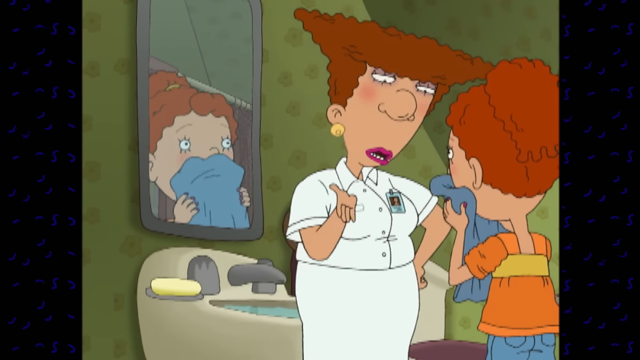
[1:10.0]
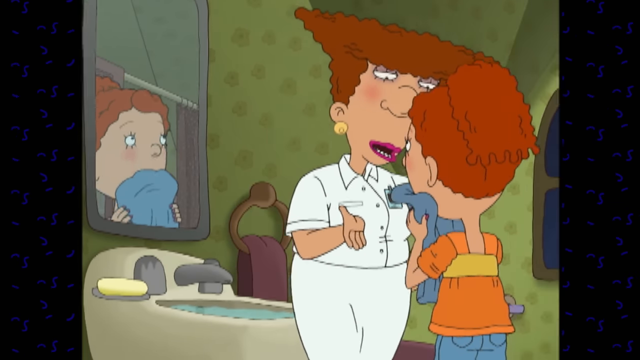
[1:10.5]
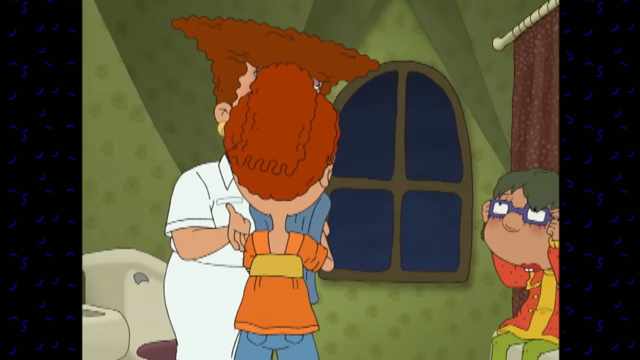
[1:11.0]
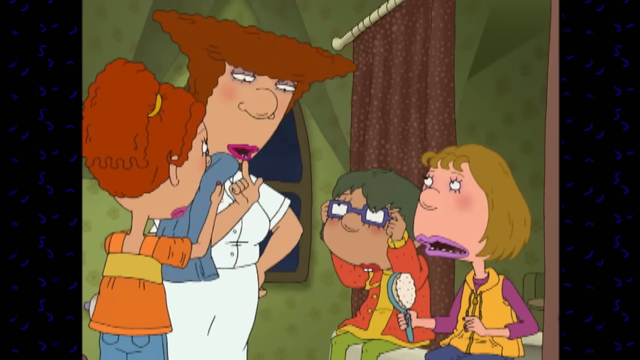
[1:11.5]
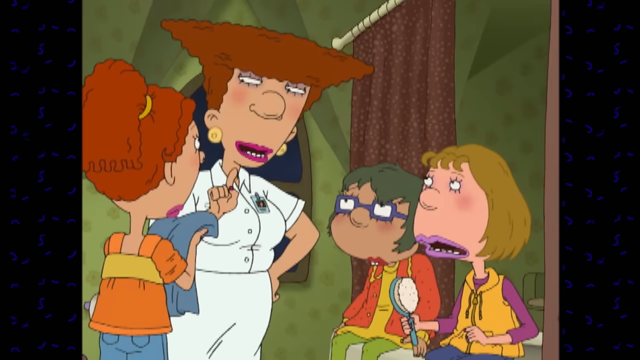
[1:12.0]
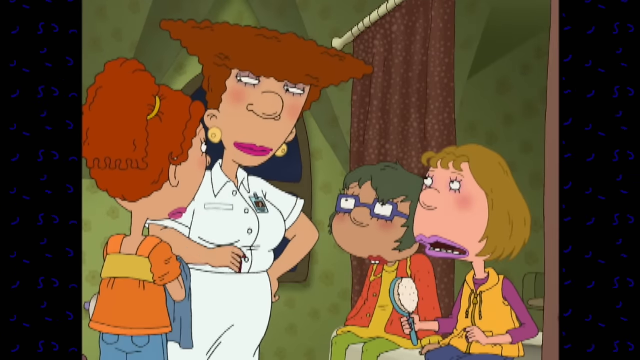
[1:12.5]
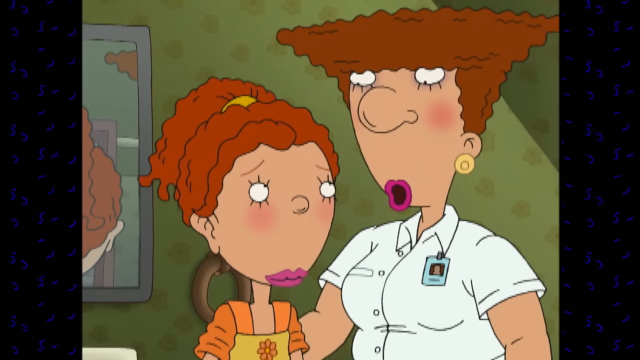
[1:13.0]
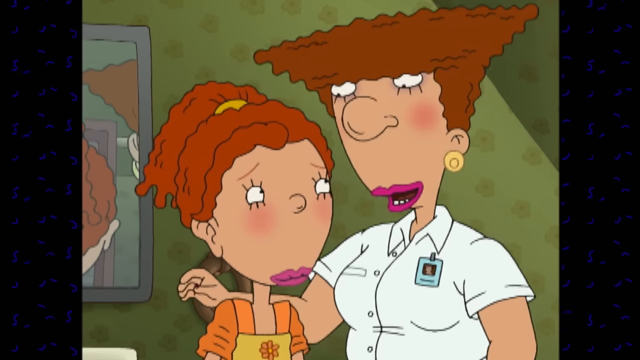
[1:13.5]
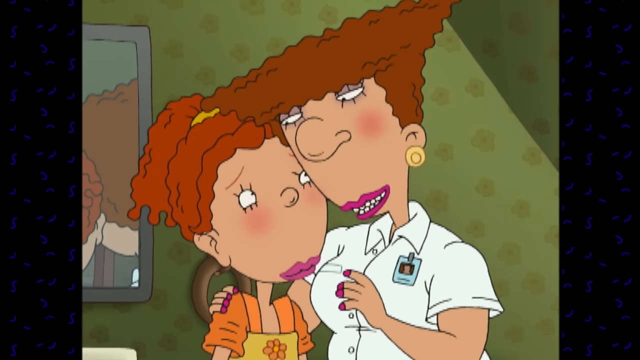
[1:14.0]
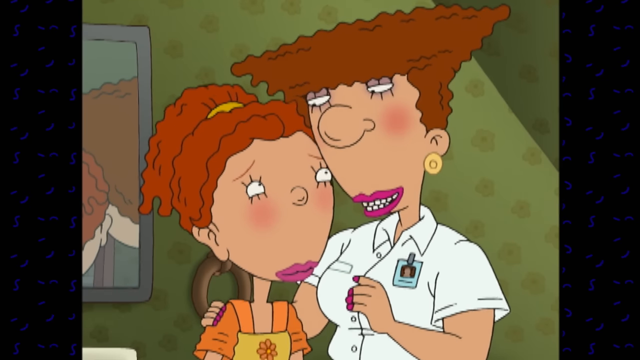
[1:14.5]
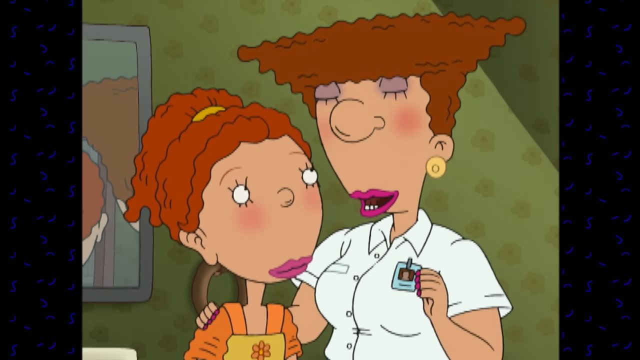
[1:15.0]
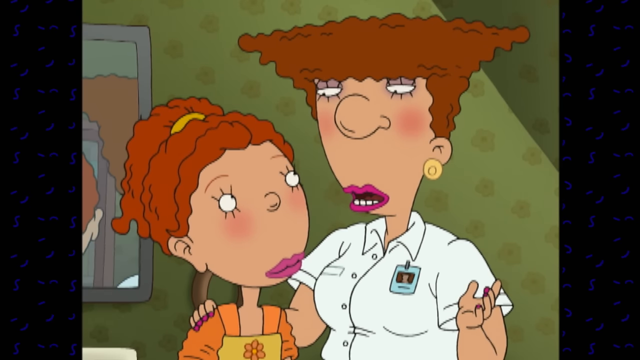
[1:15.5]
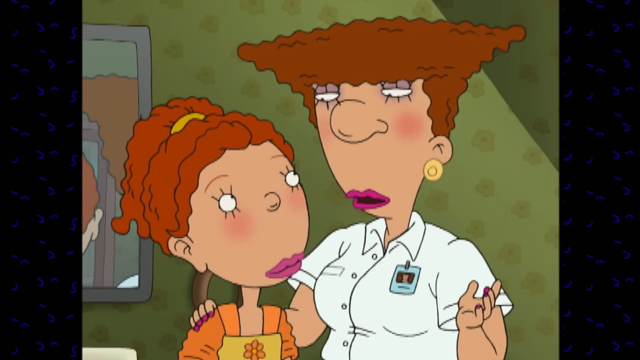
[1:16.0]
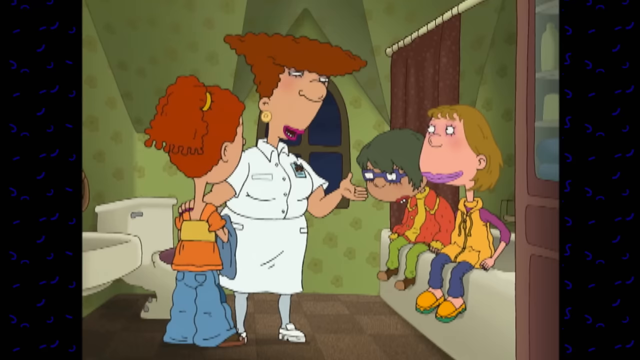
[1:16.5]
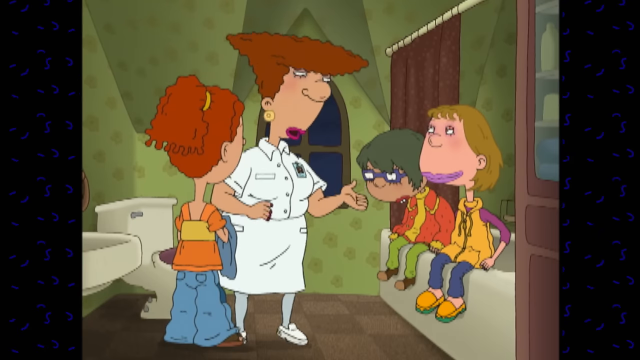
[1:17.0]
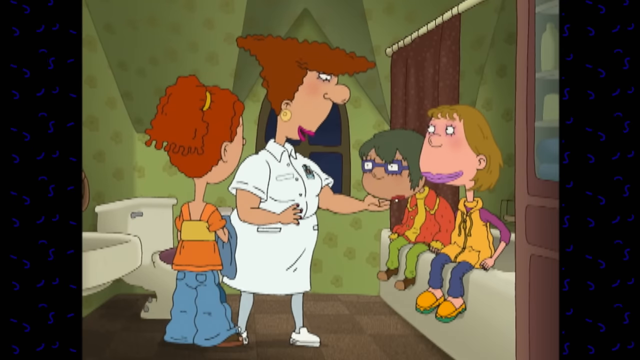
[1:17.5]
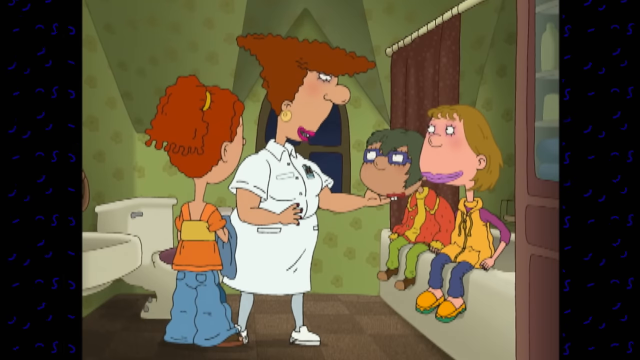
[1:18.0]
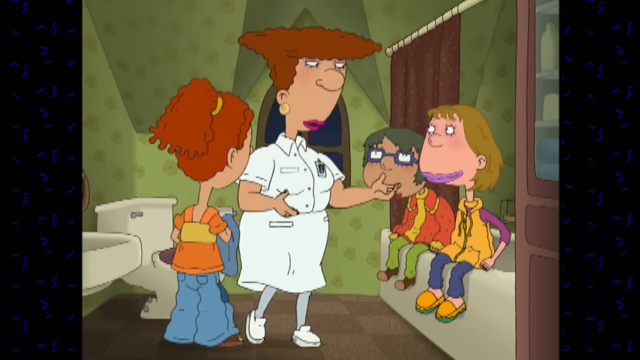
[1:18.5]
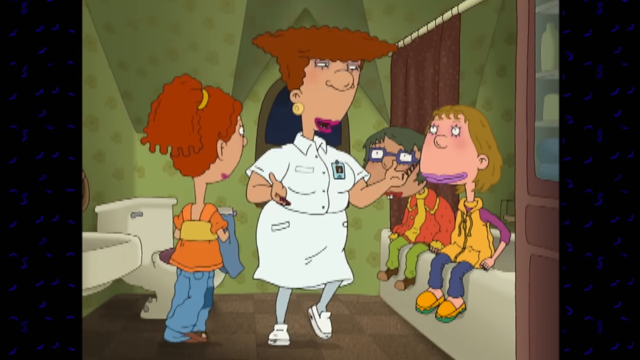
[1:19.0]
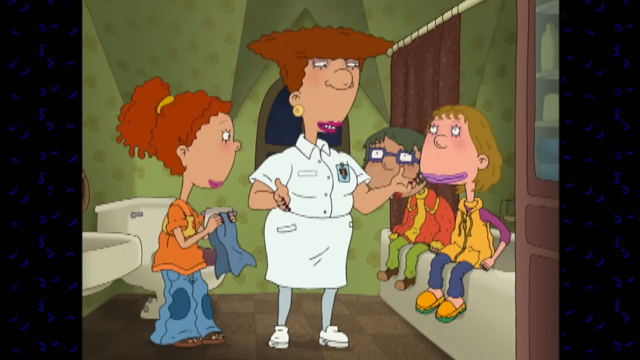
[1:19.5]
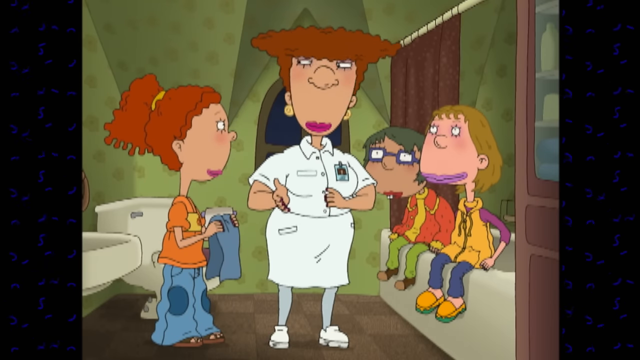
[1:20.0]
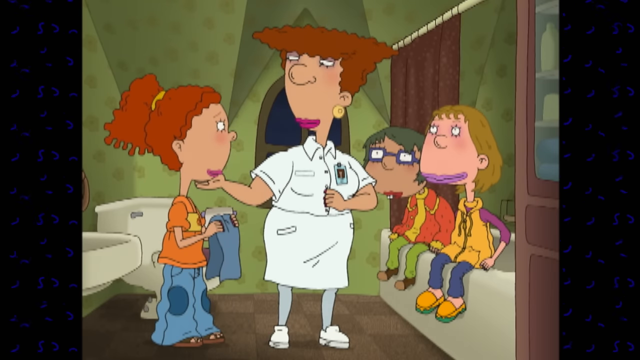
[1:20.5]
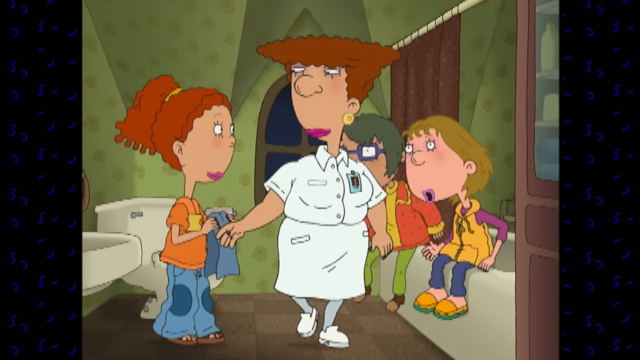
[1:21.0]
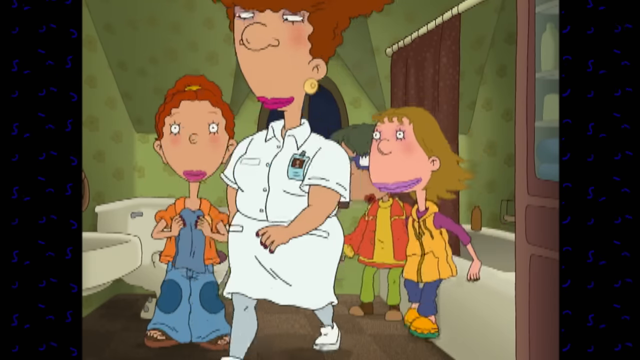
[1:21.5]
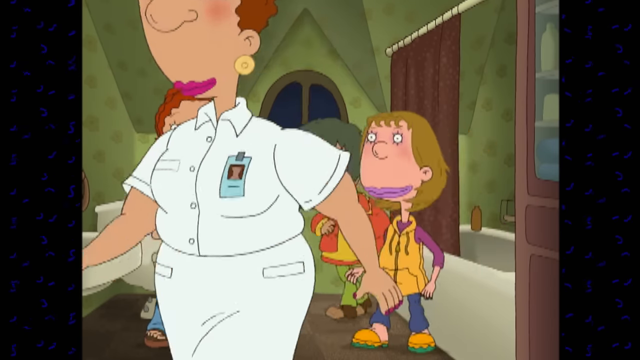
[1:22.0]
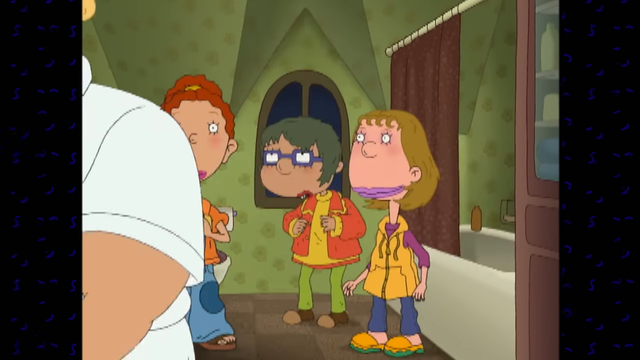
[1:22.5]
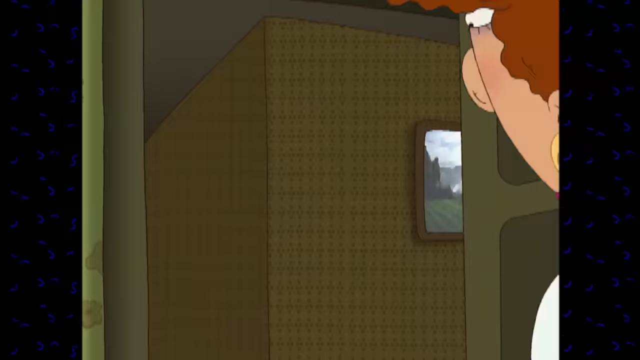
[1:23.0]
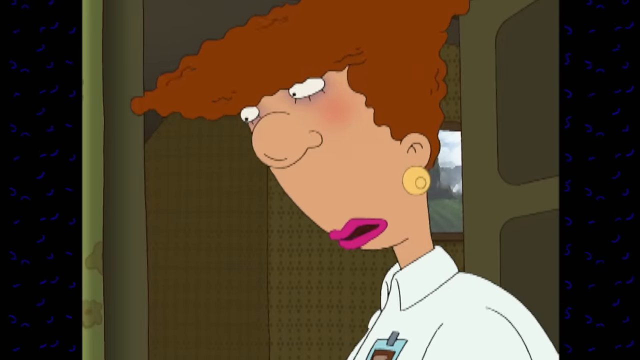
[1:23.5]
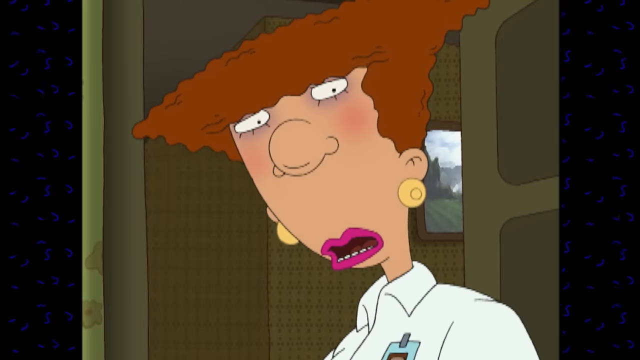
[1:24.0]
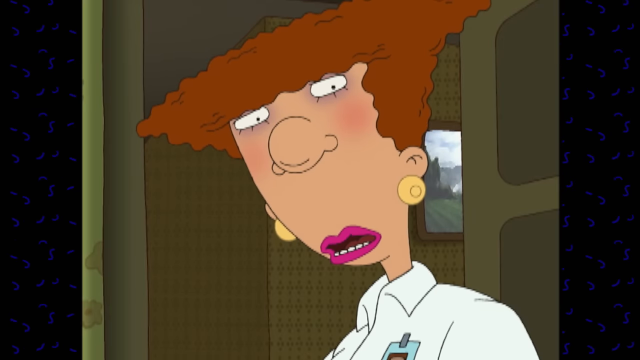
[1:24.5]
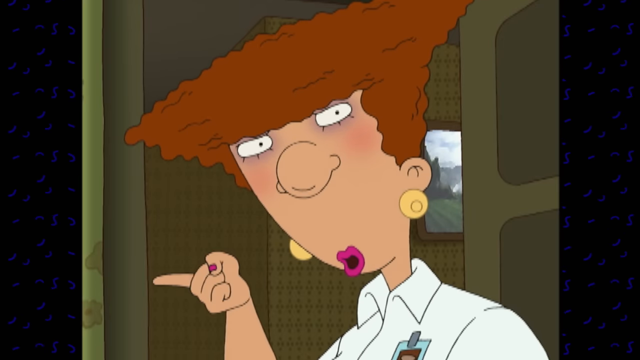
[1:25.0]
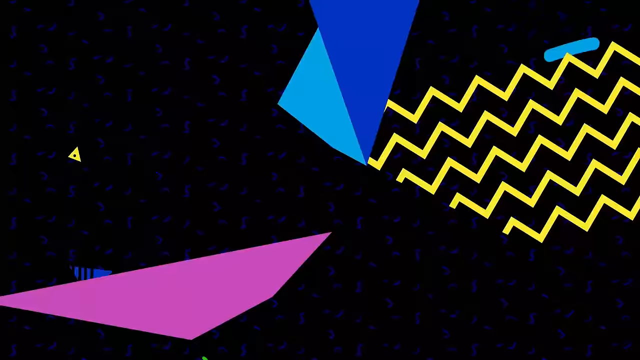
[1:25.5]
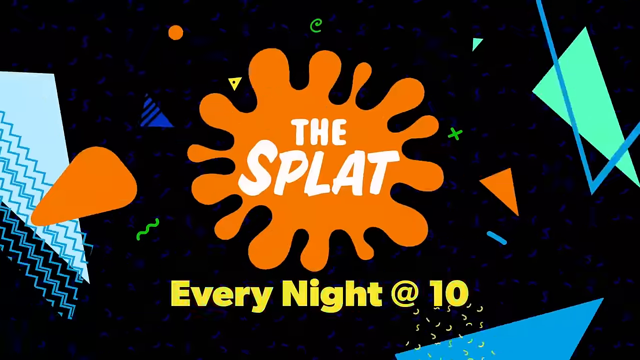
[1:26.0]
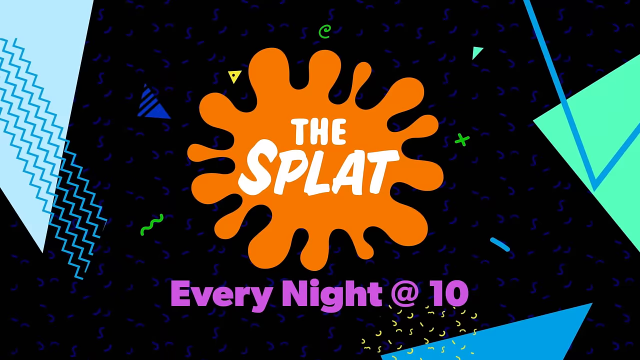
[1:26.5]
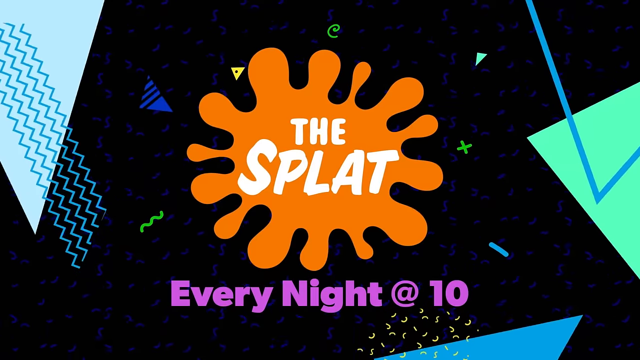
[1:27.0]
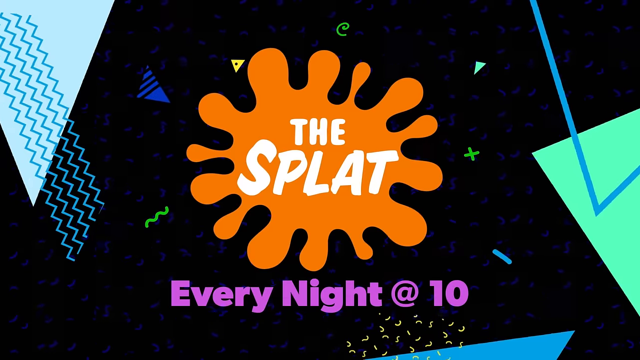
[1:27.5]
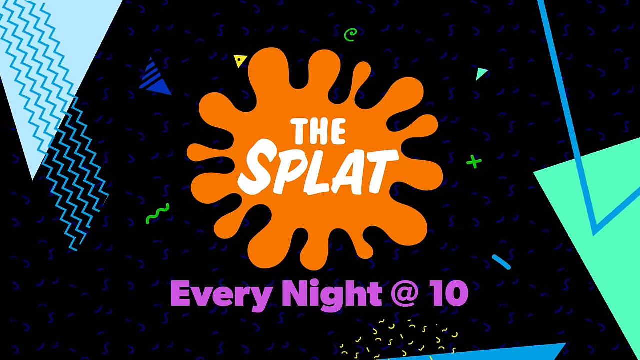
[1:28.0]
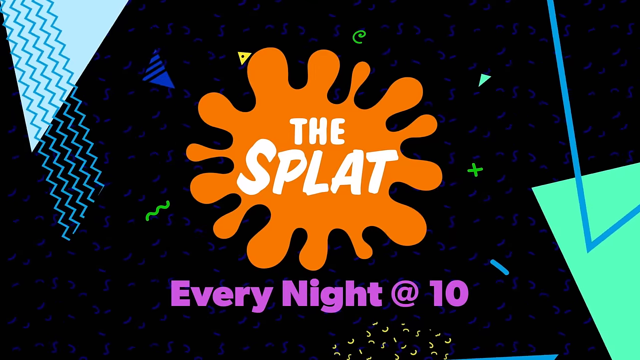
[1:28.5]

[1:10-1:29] The girl dries her face with the towel while the older lady keeps talking to her; they are still not happy. They are all in the same room. The other girl has a brush in her hand, and the boy is sitting, waiting. The older lady is still looking at the girl with orange hair, then hugs her, and the girl becomes happier. By the end, everyone is happy.